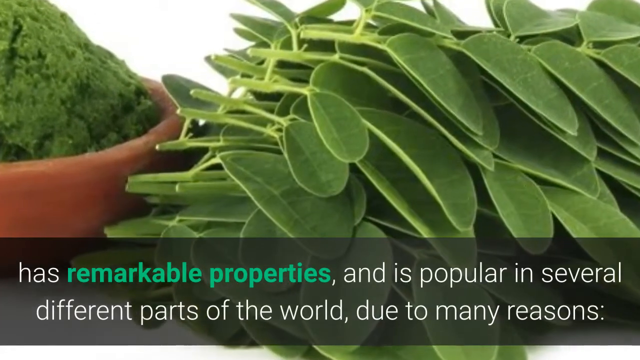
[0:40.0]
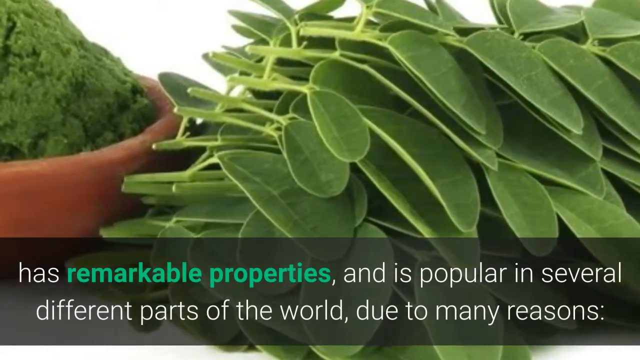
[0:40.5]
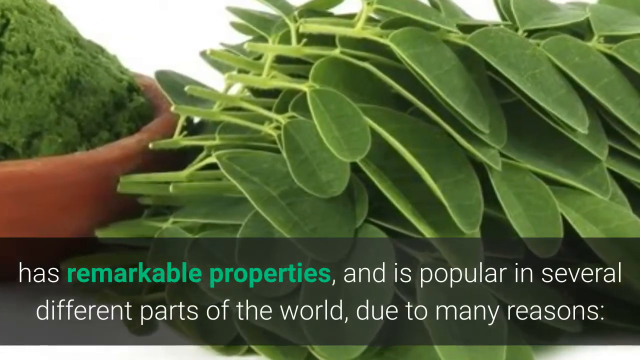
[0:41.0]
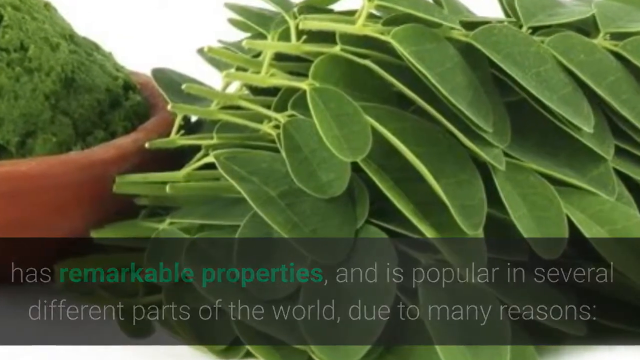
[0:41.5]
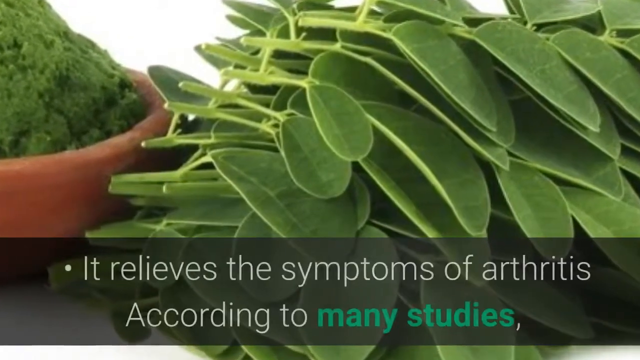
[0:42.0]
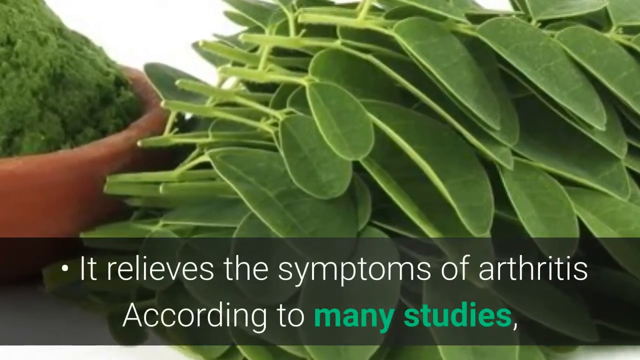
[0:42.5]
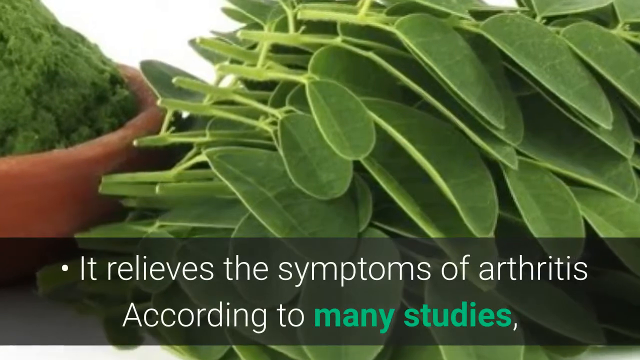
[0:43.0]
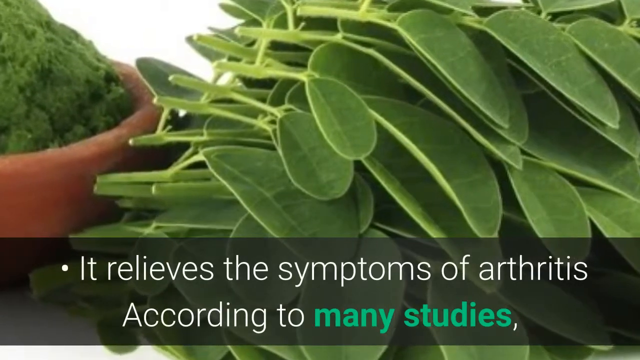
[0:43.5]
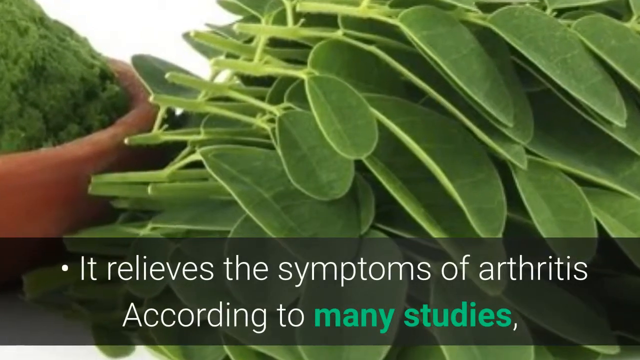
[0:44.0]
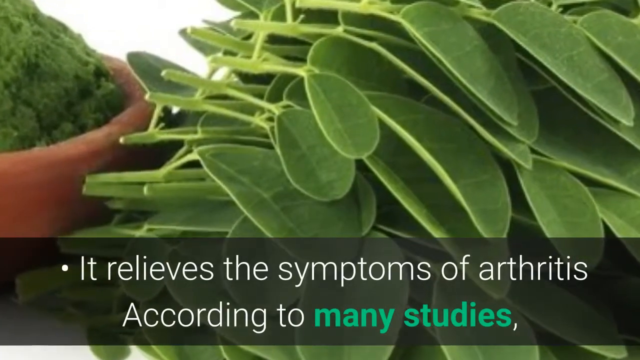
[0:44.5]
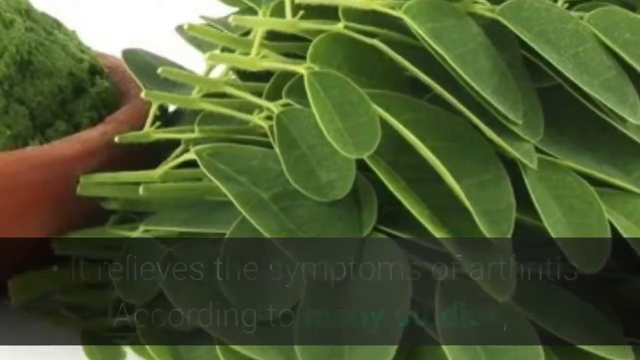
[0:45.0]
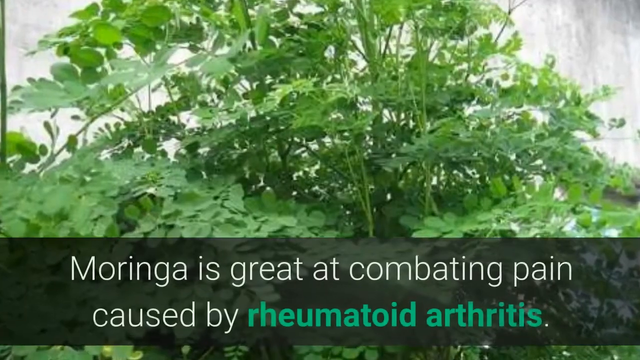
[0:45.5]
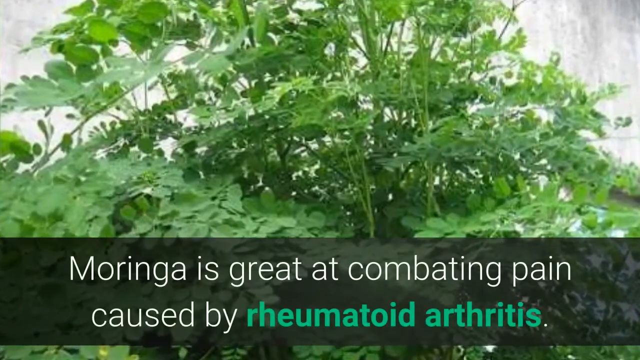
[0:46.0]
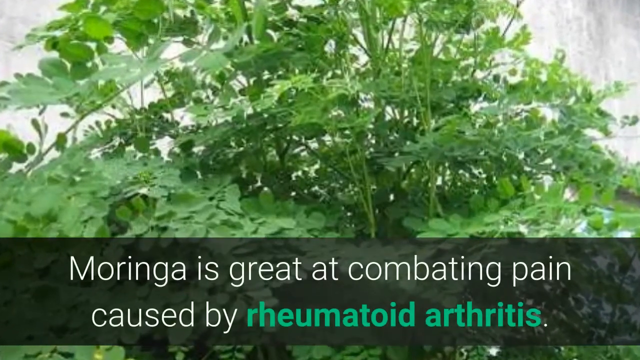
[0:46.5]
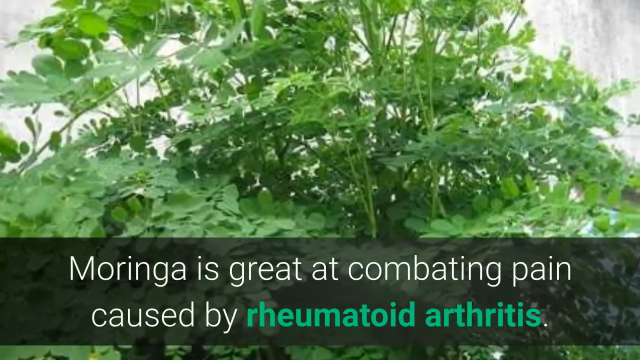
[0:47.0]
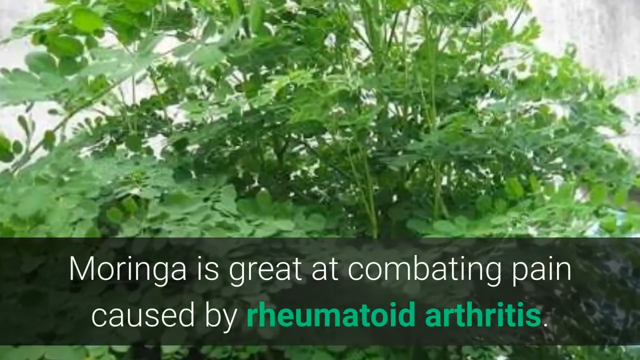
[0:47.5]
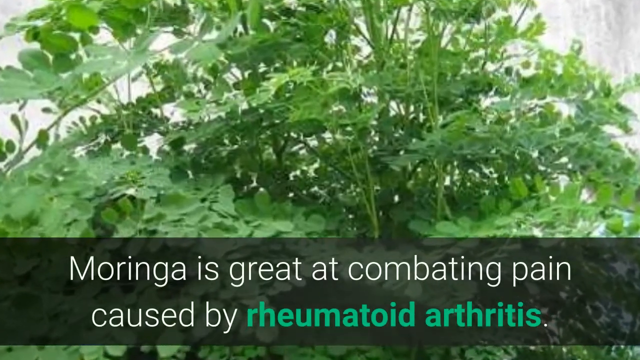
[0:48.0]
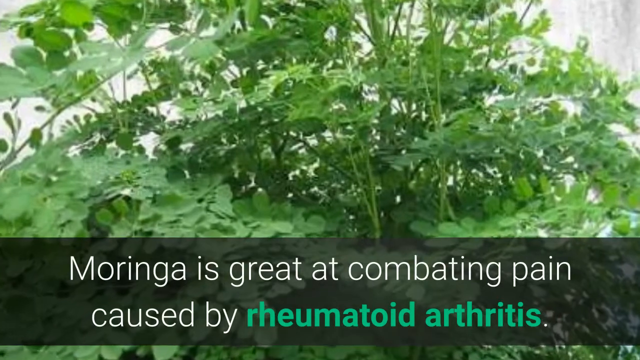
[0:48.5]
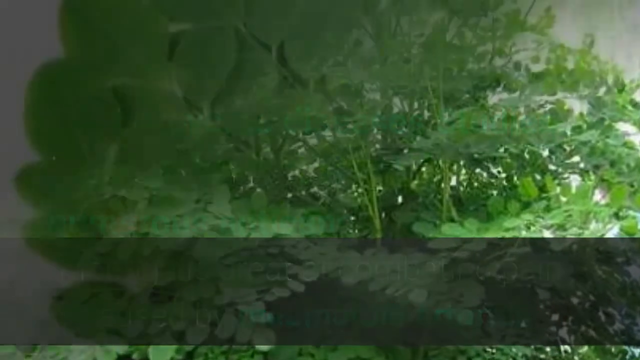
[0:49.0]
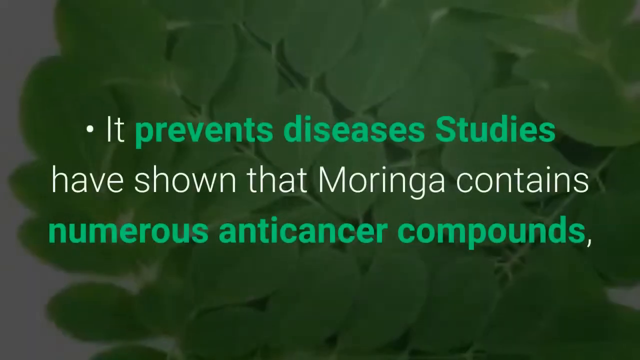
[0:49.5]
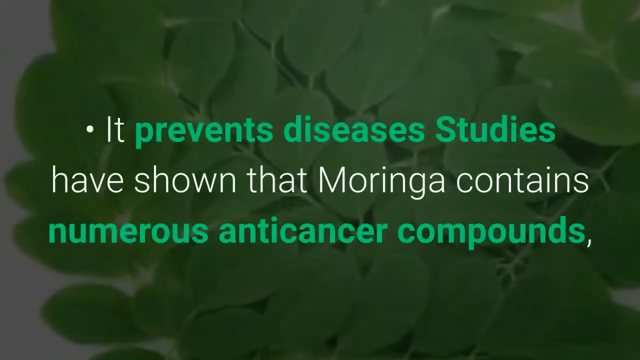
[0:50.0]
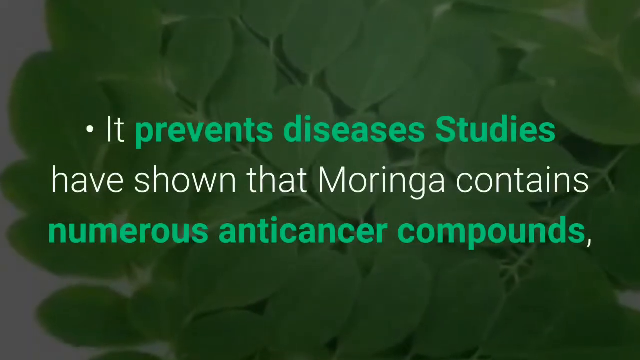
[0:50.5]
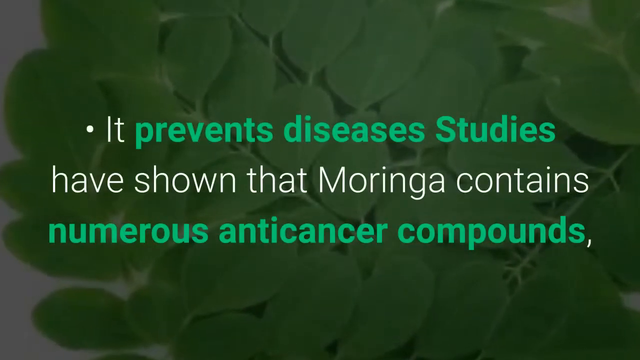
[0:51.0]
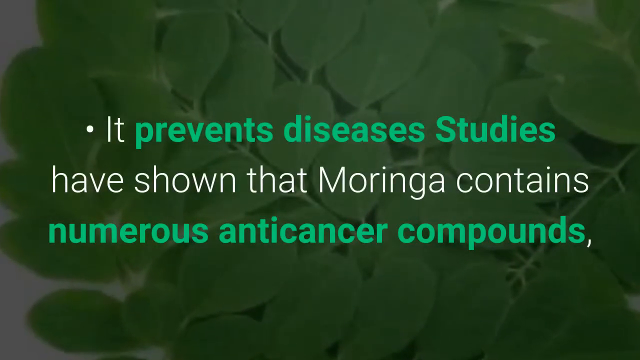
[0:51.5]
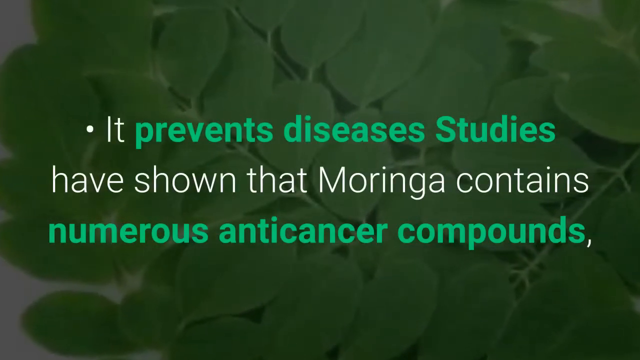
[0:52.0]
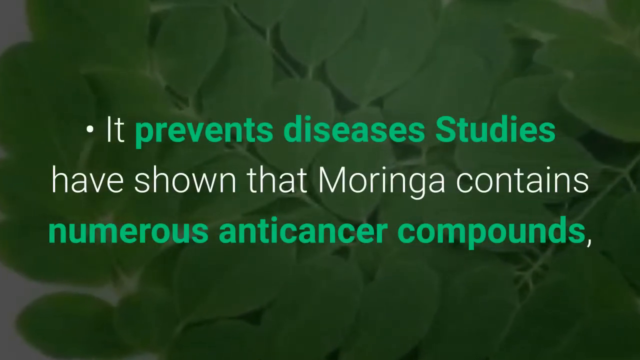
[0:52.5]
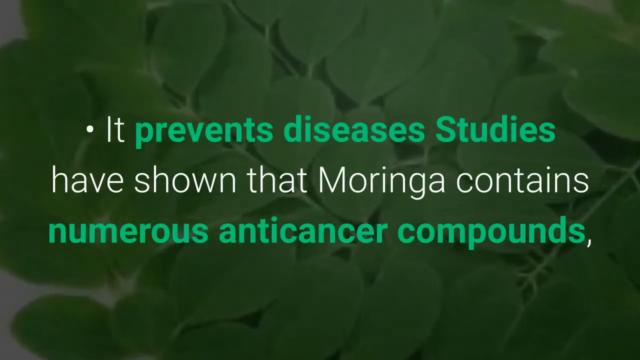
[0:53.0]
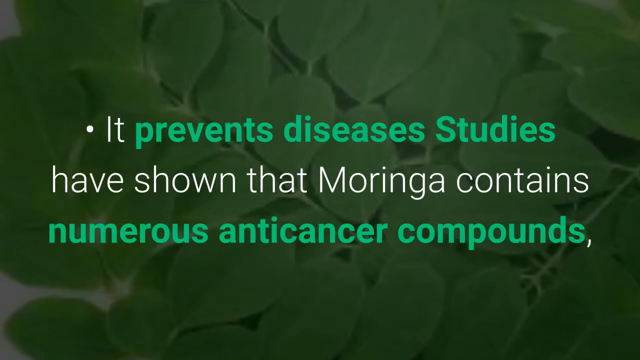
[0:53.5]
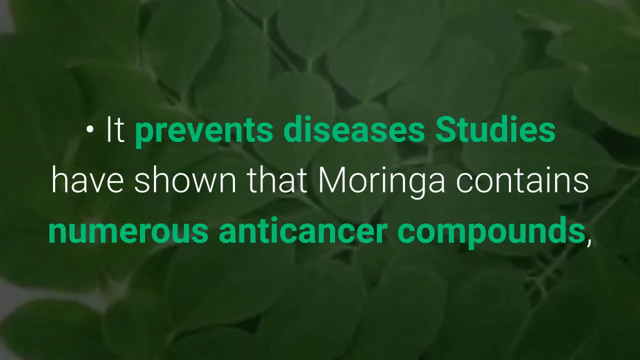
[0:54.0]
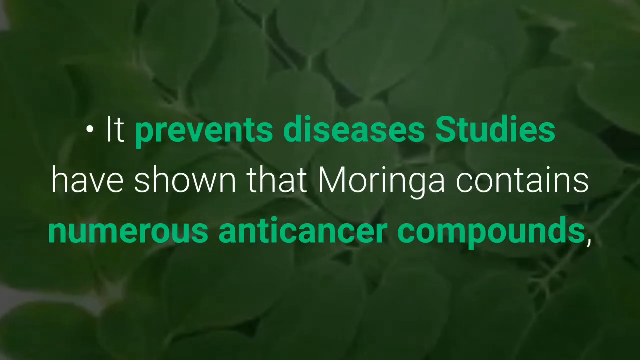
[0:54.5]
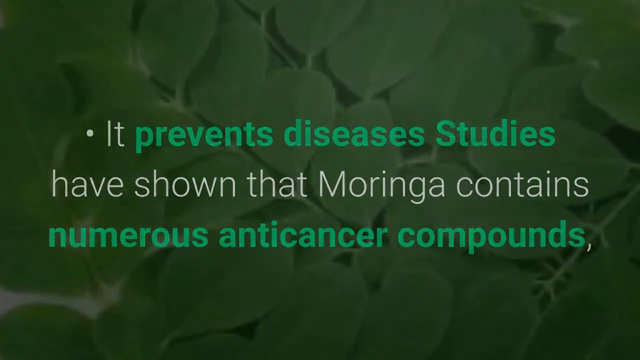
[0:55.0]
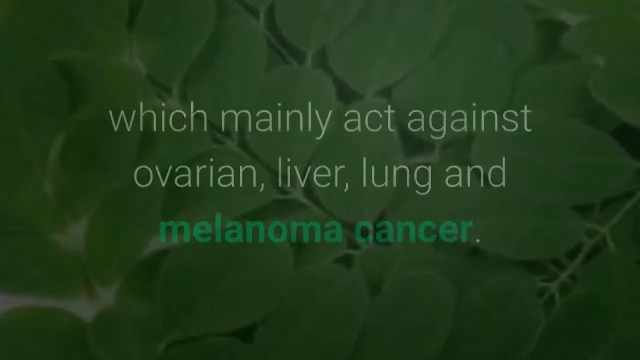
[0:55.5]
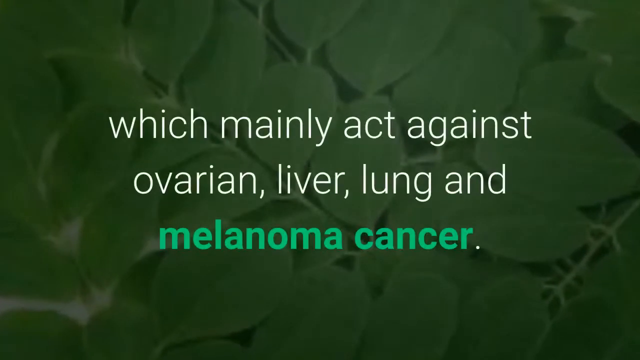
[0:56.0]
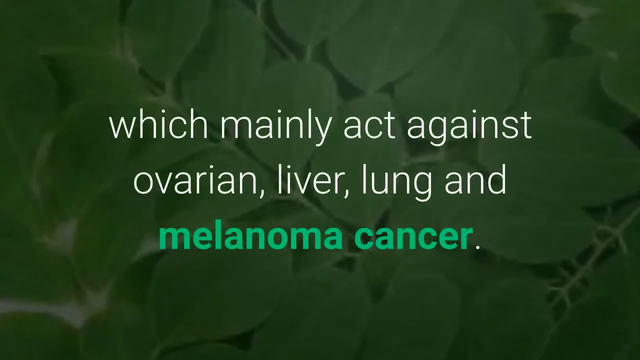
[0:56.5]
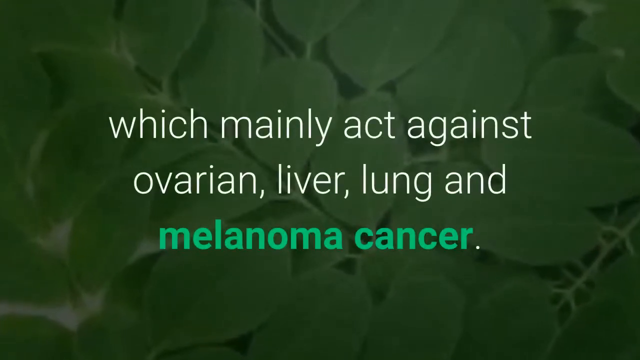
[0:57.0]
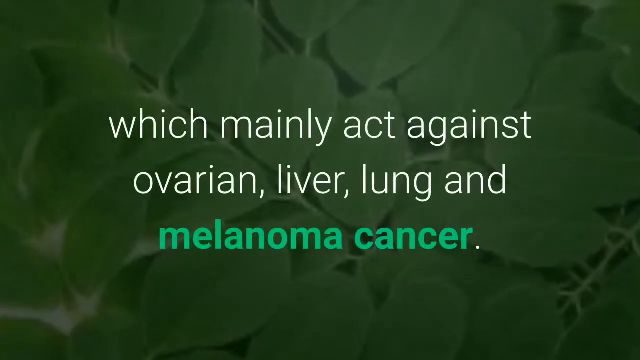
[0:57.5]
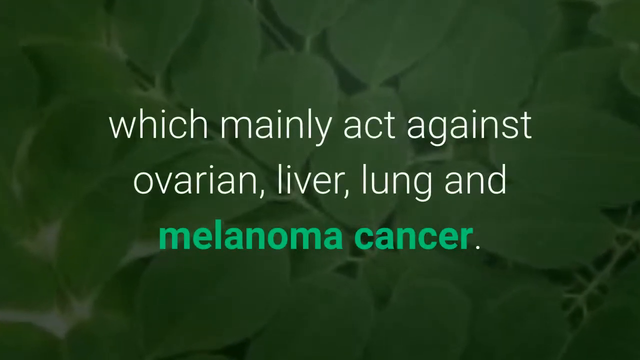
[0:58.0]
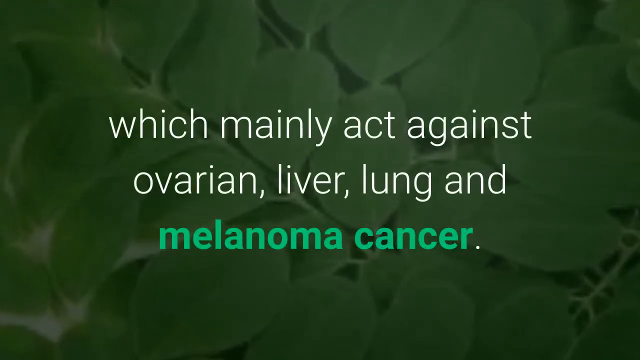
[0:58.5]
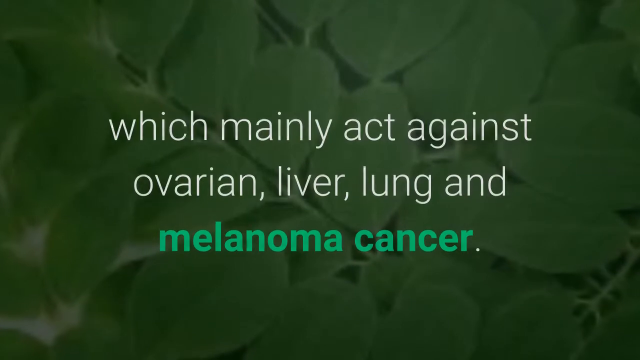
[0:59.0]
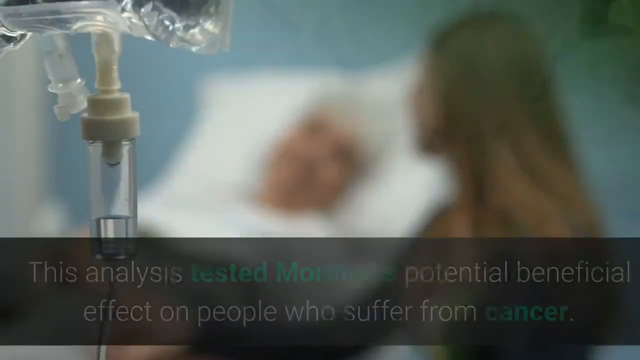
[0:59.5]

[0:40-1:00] Text says moringa "relieves symptoms of arthritis" and is great at combating pain caused by rheumatoid arthritis. It then says "prevents disease", stating that "Moringa contains numerous anti-cancer compounds" and acts against ovarian, liver, lung, and melanoma cancer. In the background are images of the leaves of the moringa plant, showing the plant across the screen.